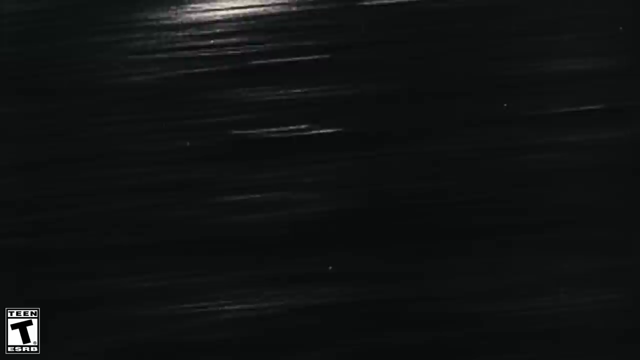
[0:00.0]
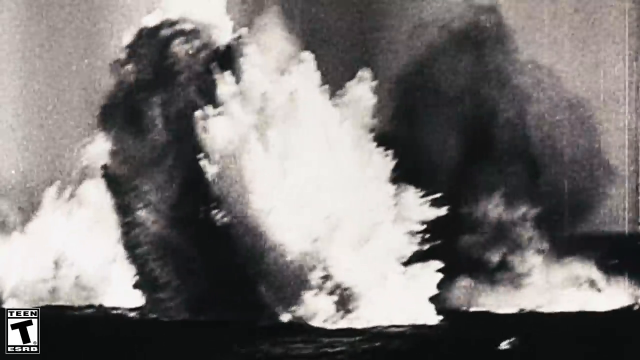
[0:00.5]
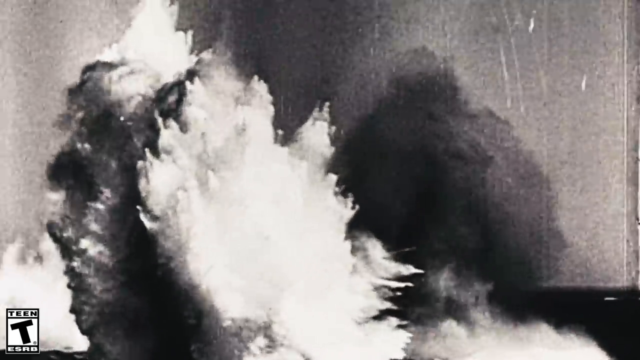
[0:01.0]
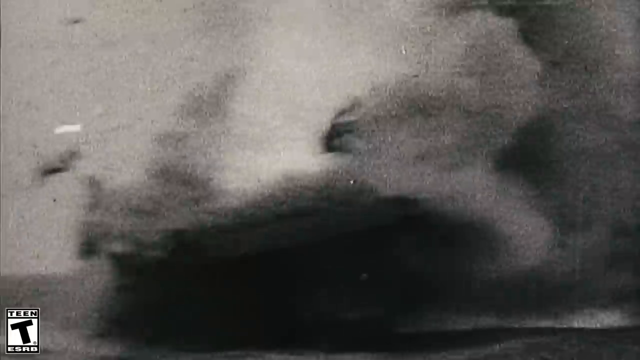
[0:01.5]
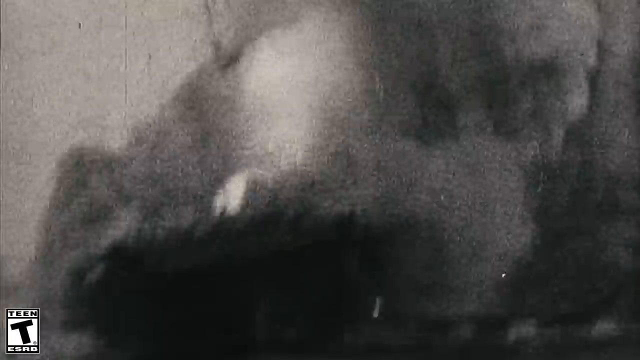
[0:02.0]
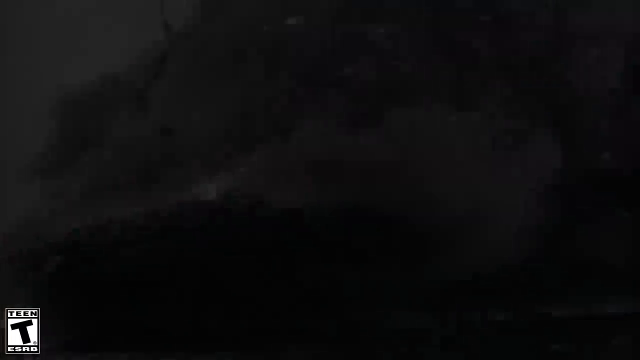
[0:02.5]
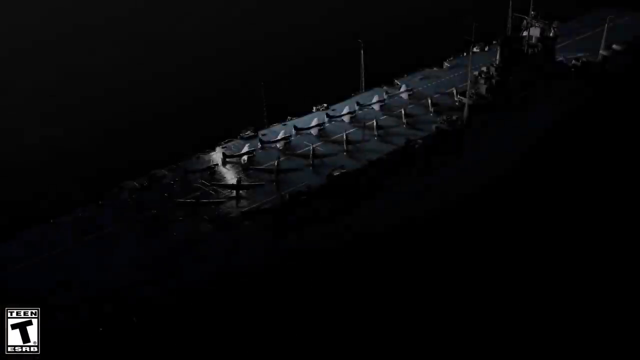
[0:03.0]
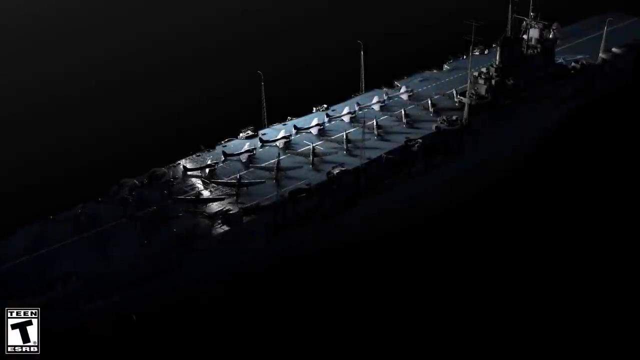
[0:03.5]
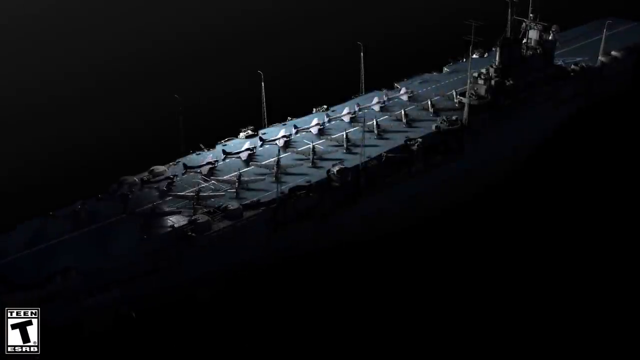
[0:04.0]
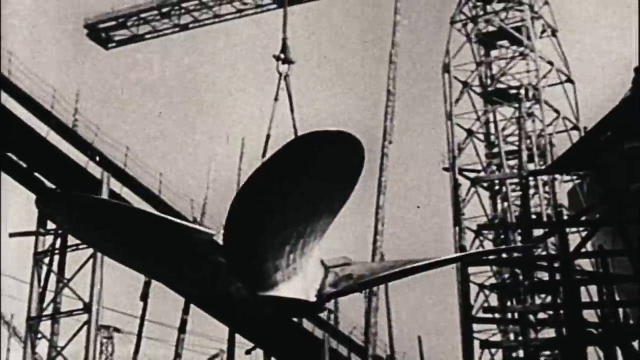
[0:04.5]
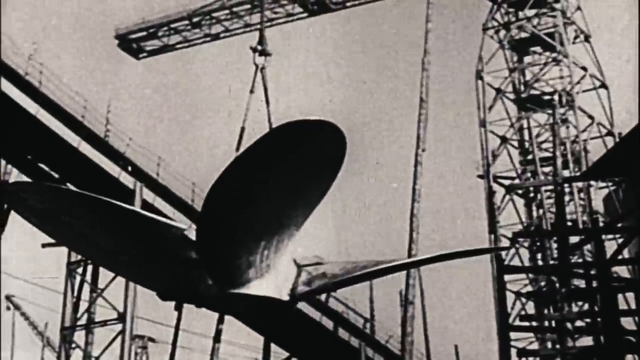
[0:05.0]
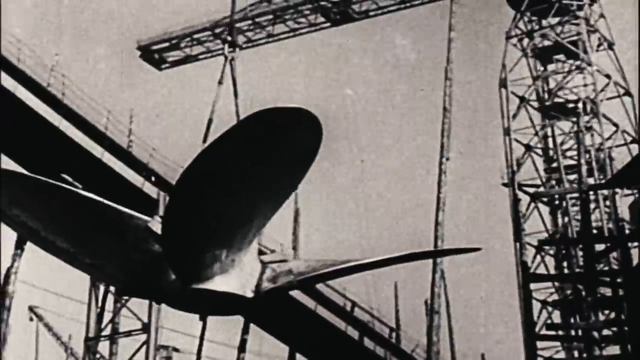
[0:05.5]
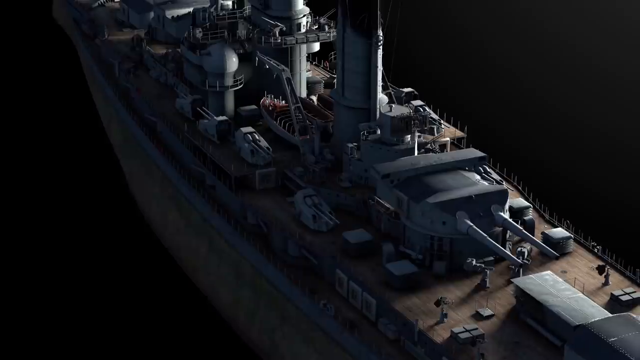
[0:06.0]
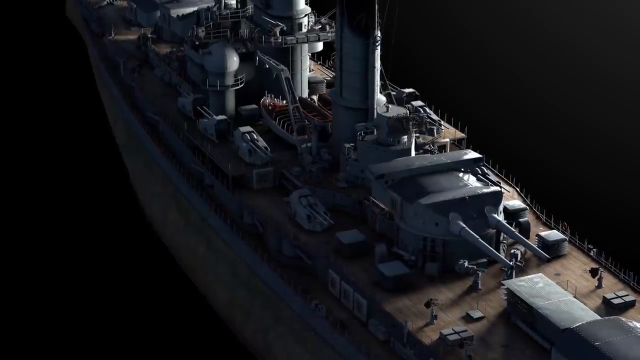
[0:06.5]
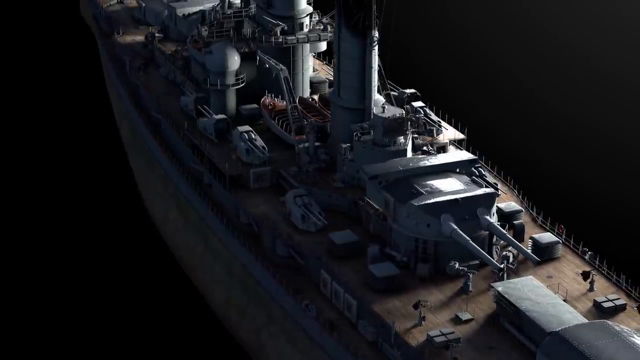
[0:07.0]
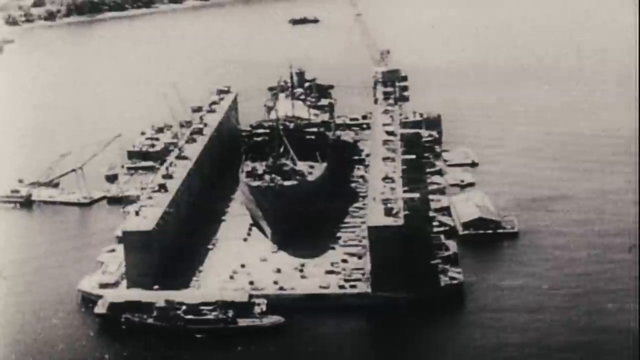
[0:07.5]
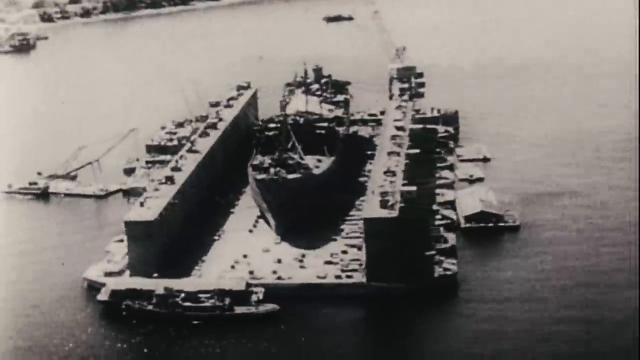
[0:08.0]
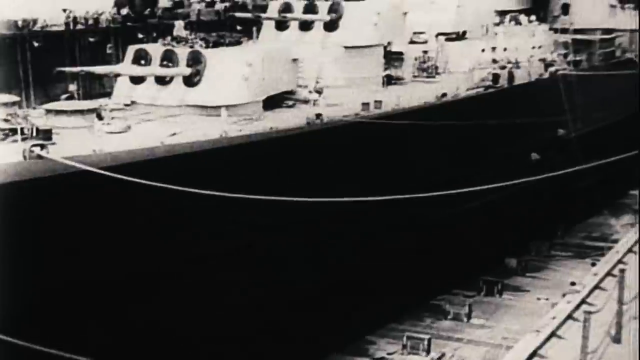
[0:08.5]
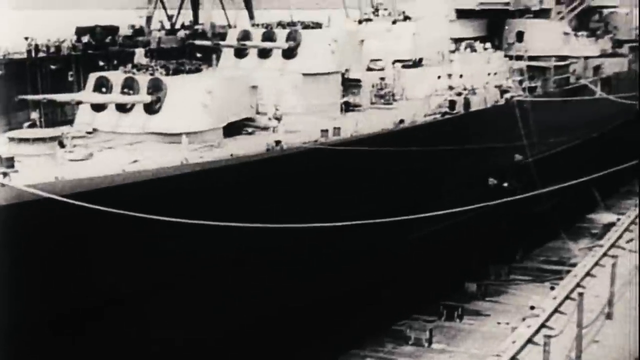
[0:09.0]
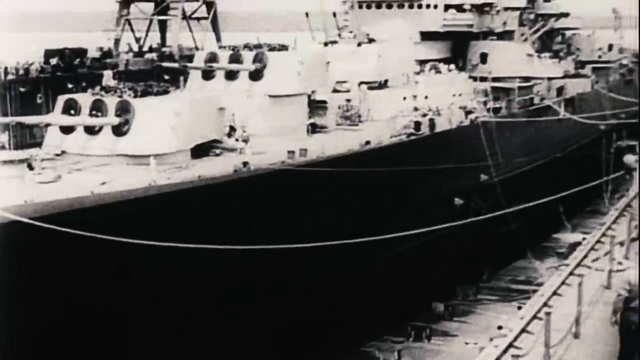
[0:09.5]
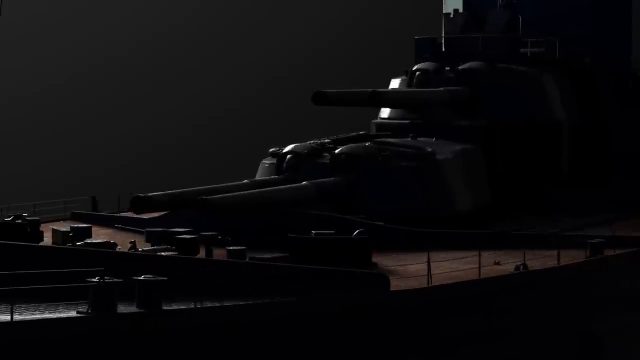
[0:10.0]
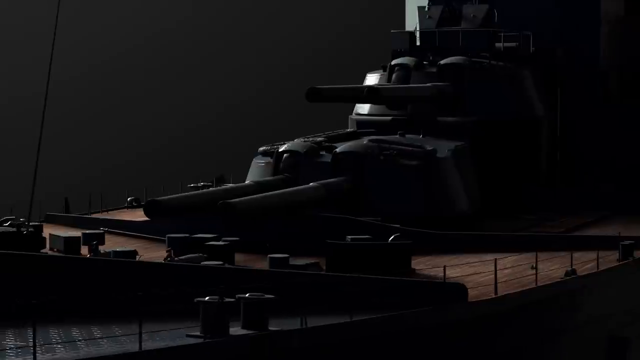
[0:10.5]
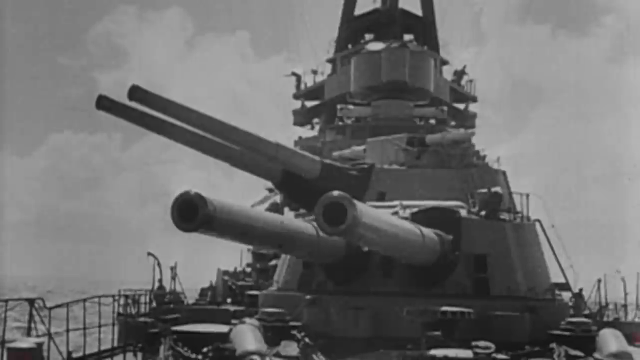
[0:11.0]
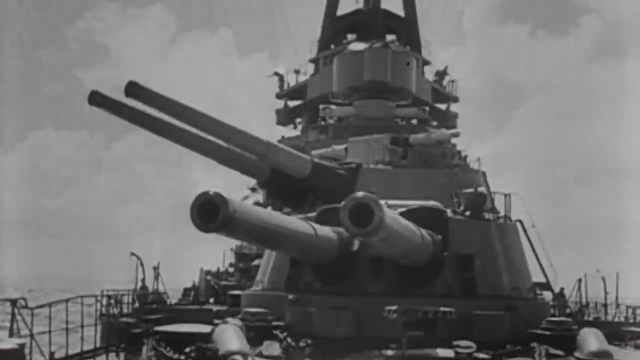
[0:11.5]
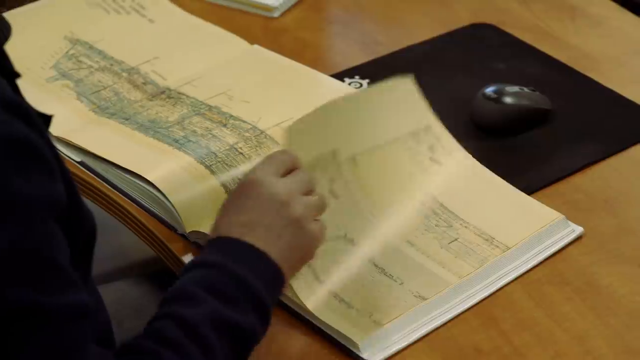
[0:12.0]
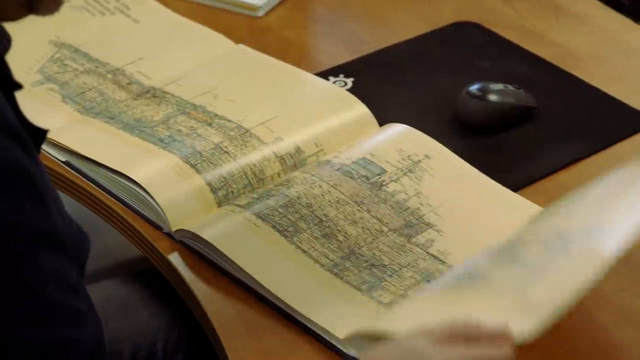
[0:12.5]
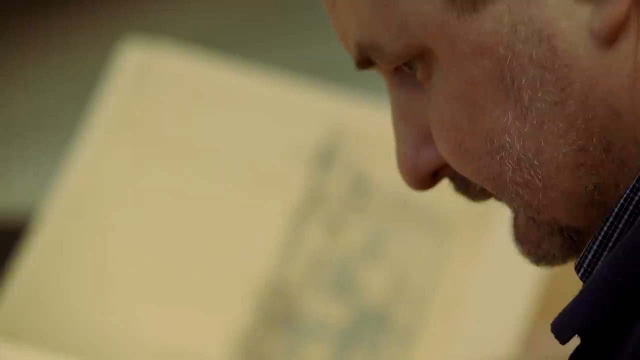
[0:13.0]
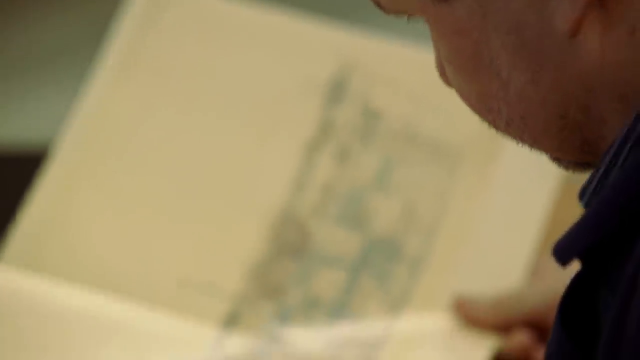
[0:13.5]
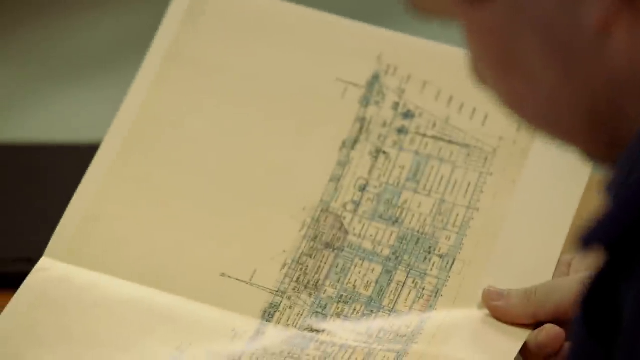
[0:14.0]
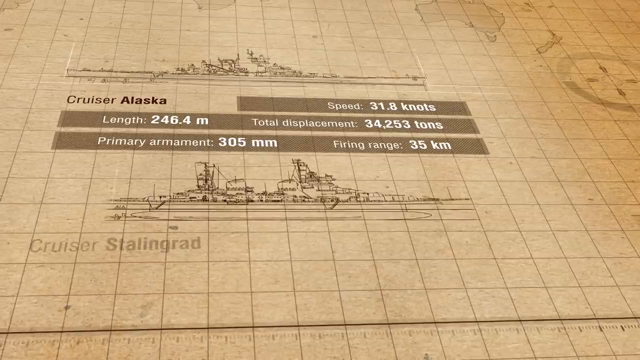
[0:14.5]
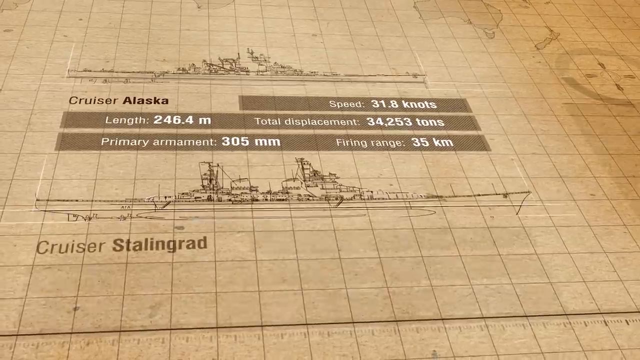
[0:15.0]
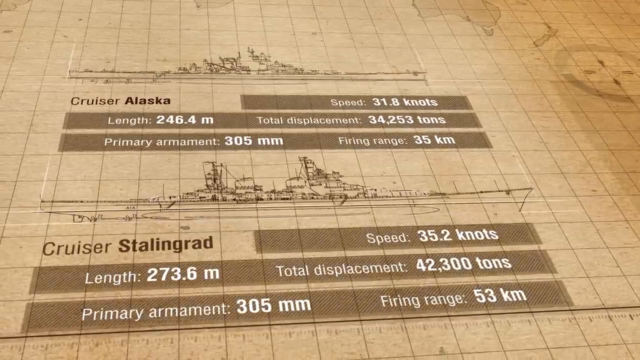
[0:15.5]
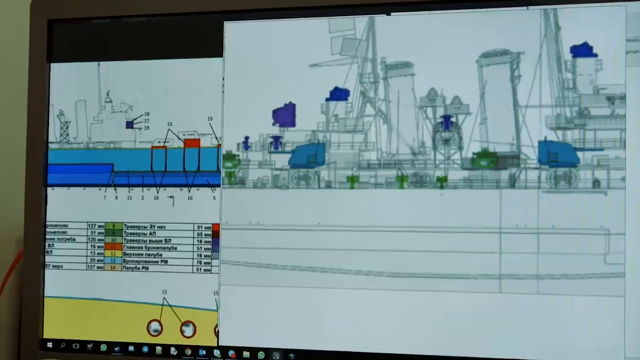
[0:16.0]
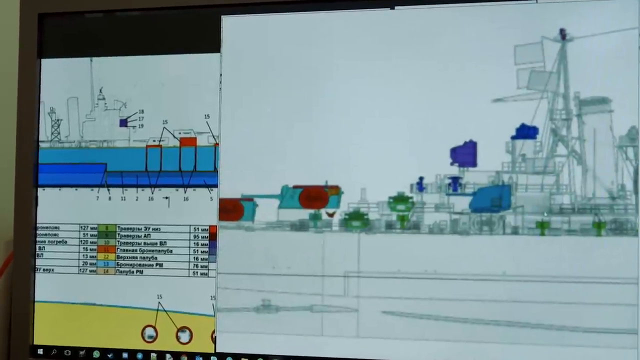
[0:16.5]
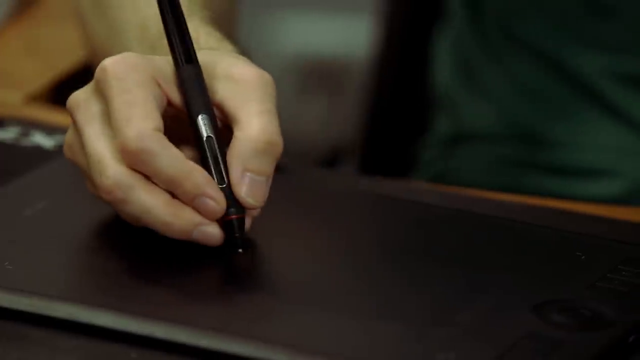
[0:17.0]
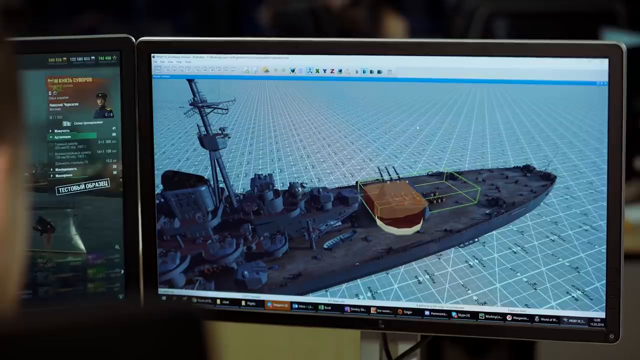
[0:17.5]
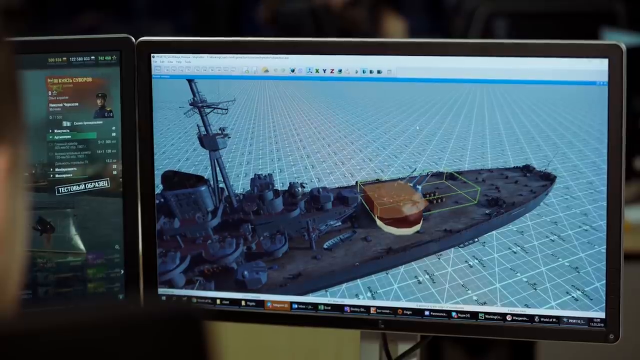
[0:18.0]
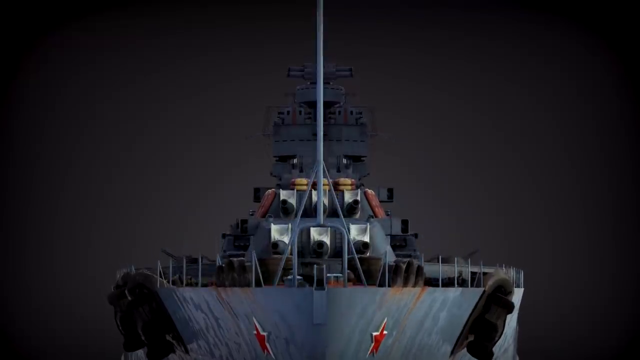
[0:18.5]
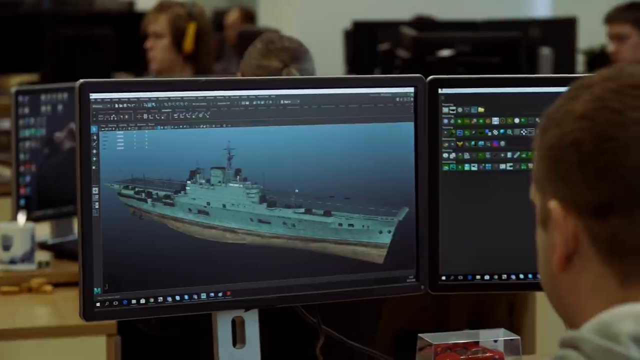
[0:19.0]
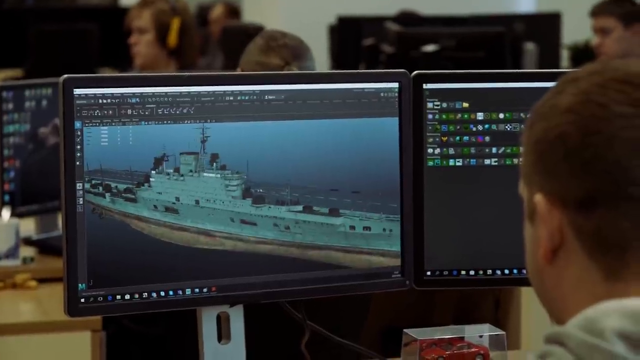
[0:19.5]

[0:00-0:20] Black-and-white footage appears to show bombs set off in the ocean, with large explosions of a ship. Another black-and-white shot appears to show a ship with military planes on a runway. Next, a ship's motor blades are moved by a crane. The footage then changes to a color 3D rendered model of a warship. A black-and-white shot of another Navy ship from the 50s or 60s follows, then an AI-generated model of a military warship. A black-and-white shot of a warship shows the barrels of its massive guns. A man opens a book containing warship blueprints, his hands visible as he opens it, and then his face is shown as he looks at the book of blueprints. AI-generated information about the specifics of that warship is added next. Finally, a CGI of a warship appears on a computer screen, followed by various shots of how the warship is possibly created.